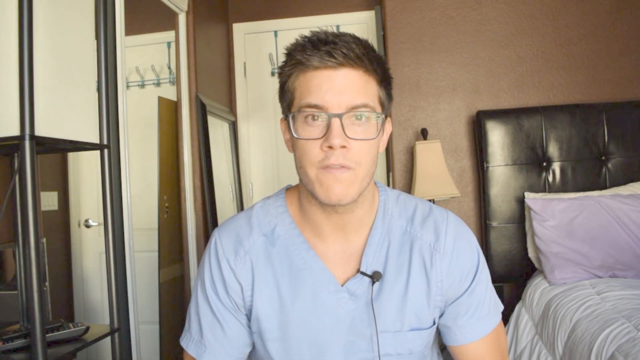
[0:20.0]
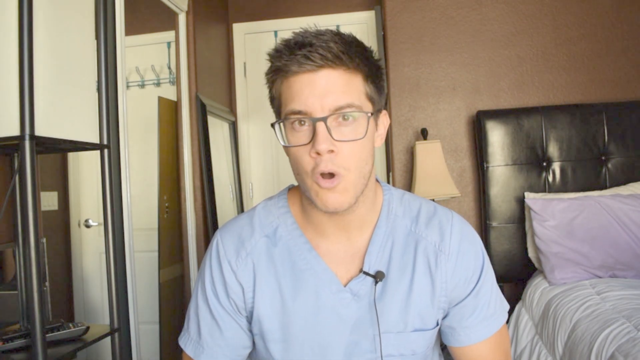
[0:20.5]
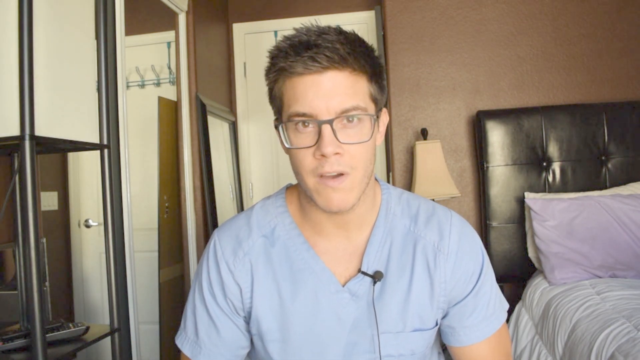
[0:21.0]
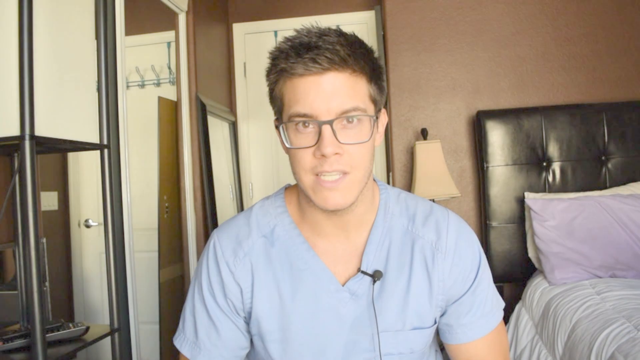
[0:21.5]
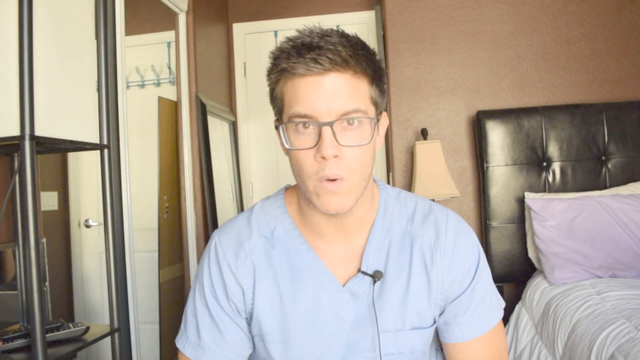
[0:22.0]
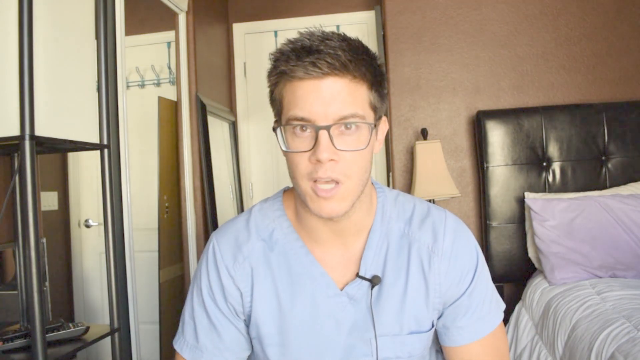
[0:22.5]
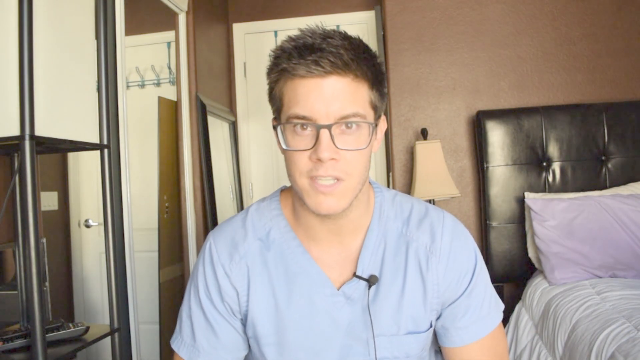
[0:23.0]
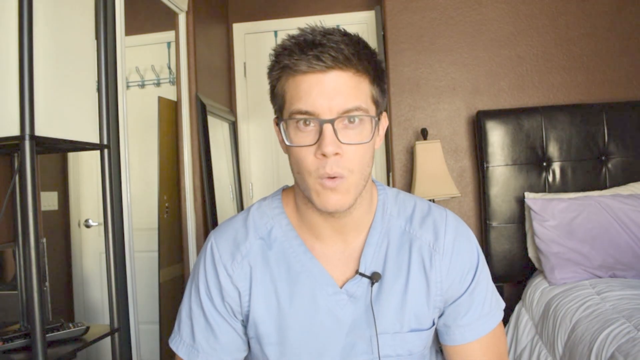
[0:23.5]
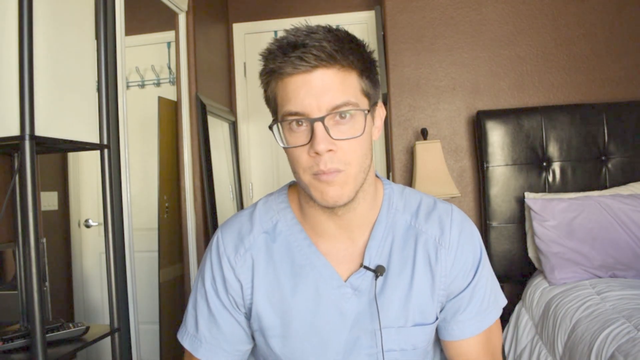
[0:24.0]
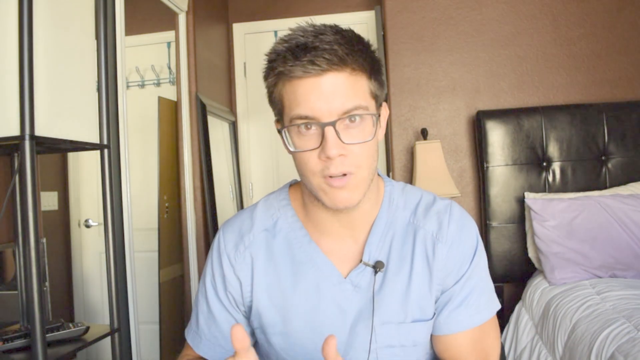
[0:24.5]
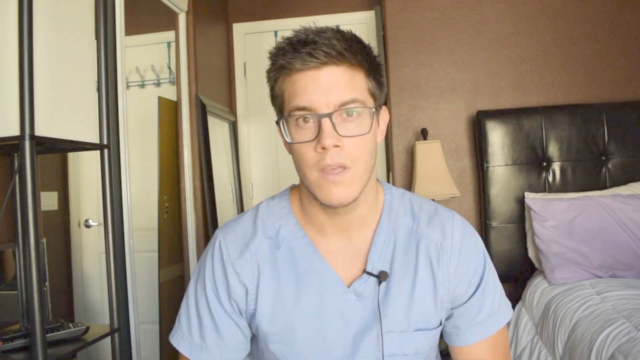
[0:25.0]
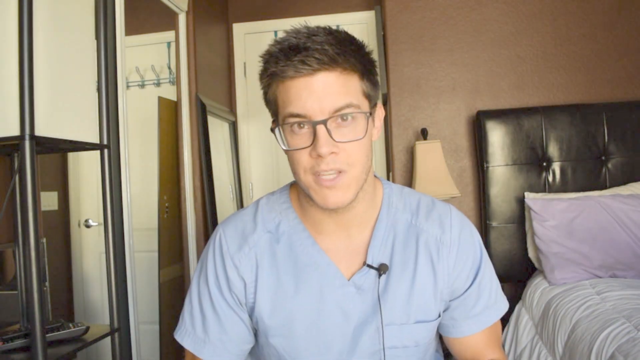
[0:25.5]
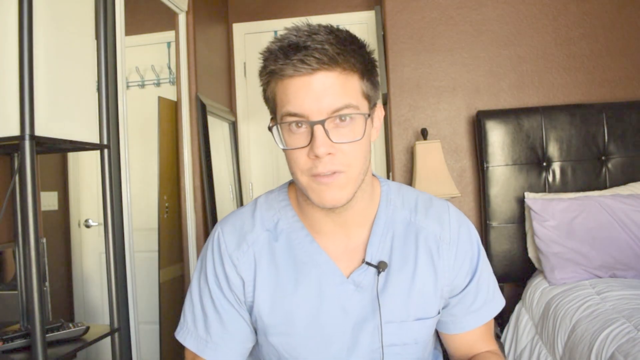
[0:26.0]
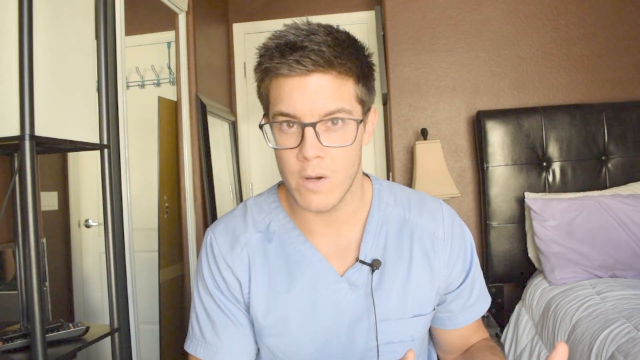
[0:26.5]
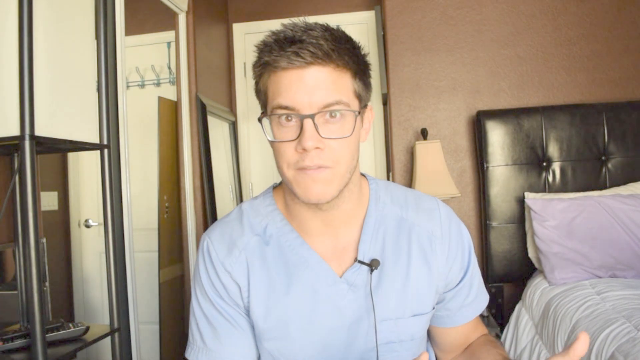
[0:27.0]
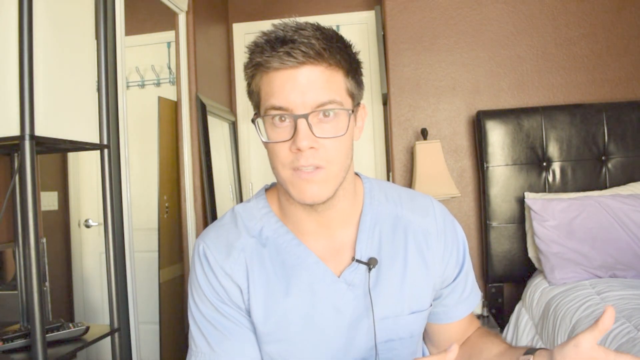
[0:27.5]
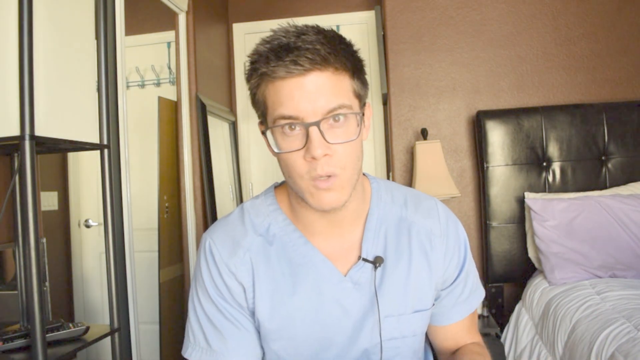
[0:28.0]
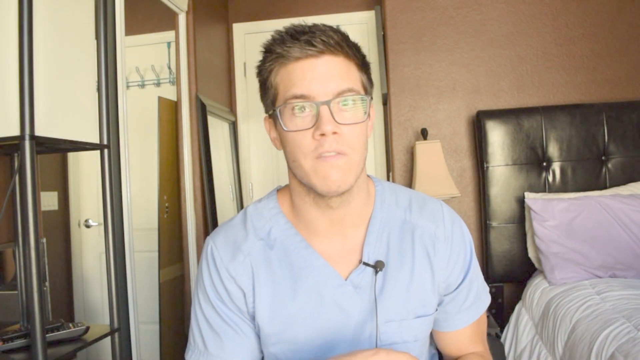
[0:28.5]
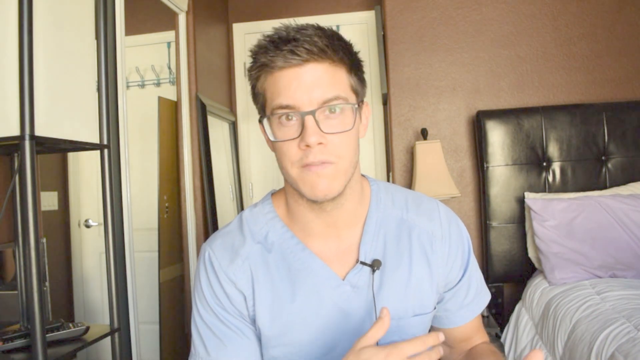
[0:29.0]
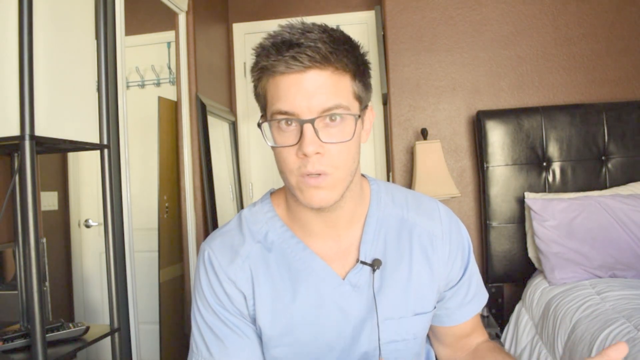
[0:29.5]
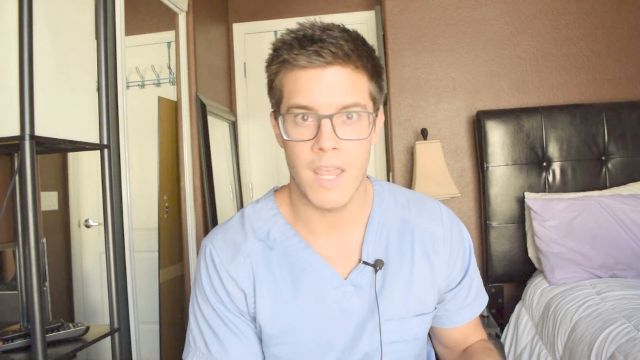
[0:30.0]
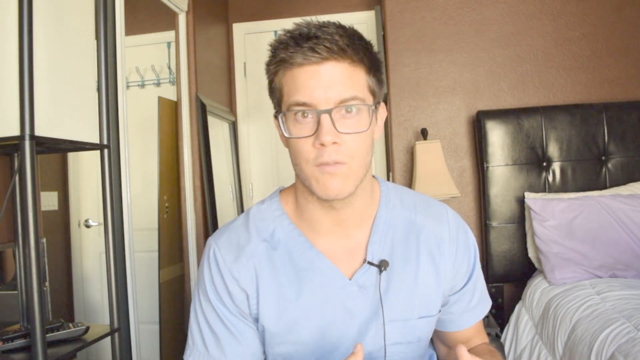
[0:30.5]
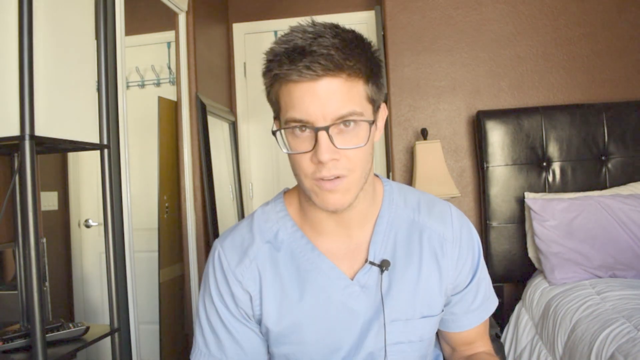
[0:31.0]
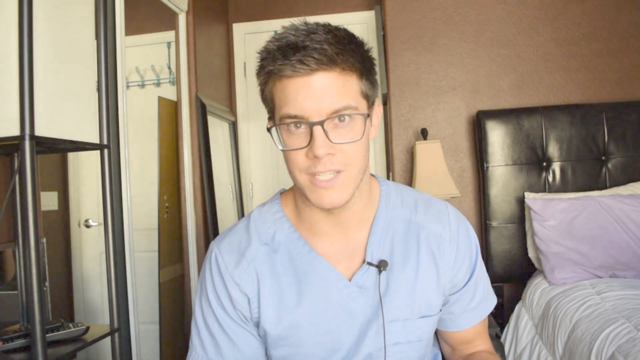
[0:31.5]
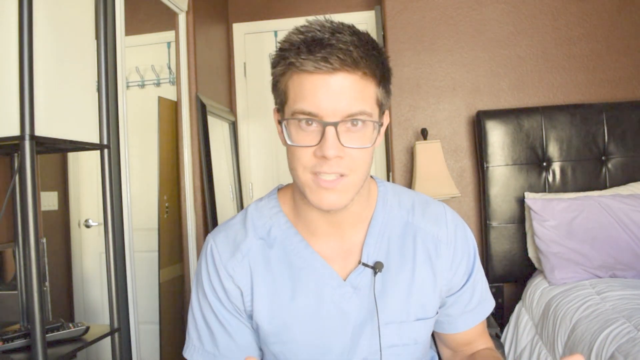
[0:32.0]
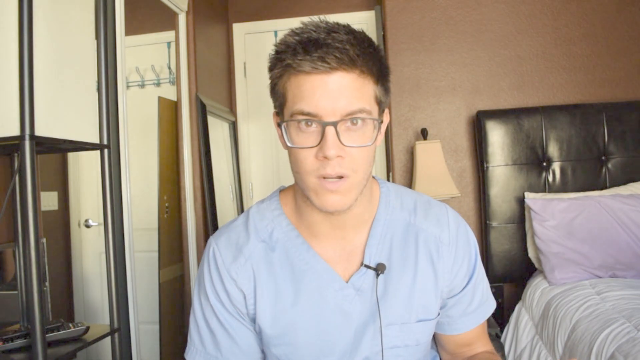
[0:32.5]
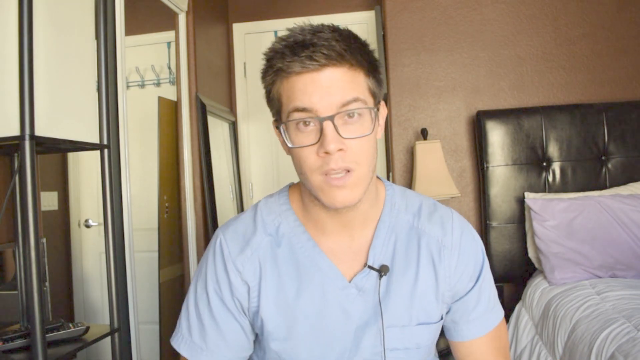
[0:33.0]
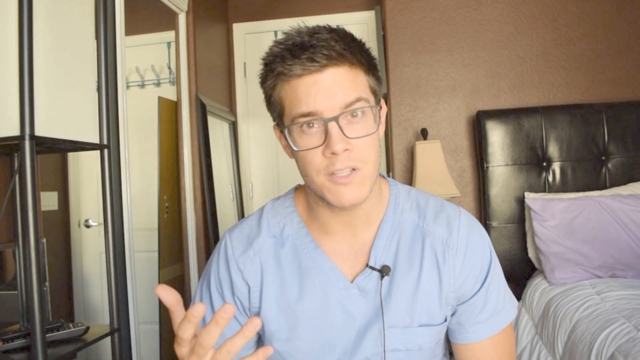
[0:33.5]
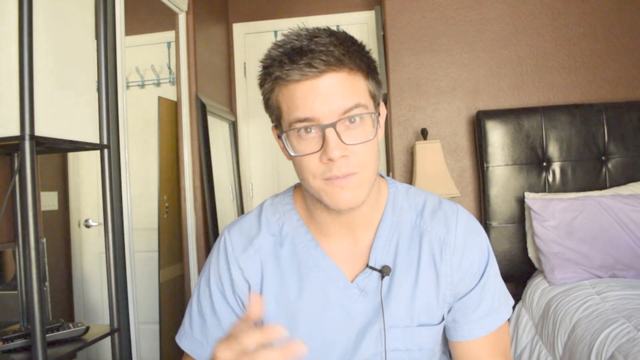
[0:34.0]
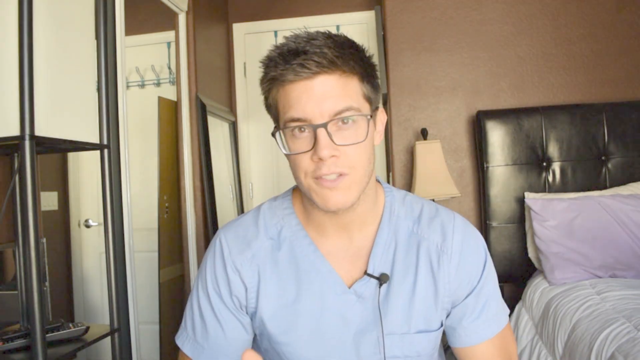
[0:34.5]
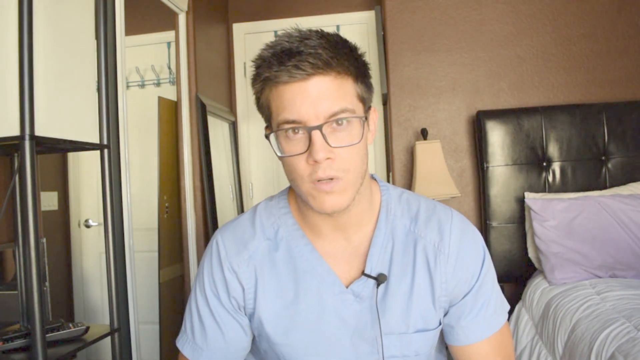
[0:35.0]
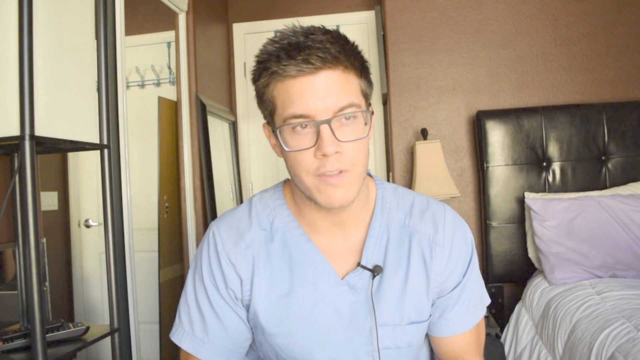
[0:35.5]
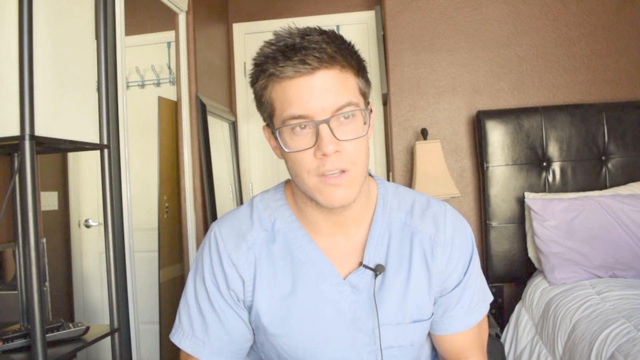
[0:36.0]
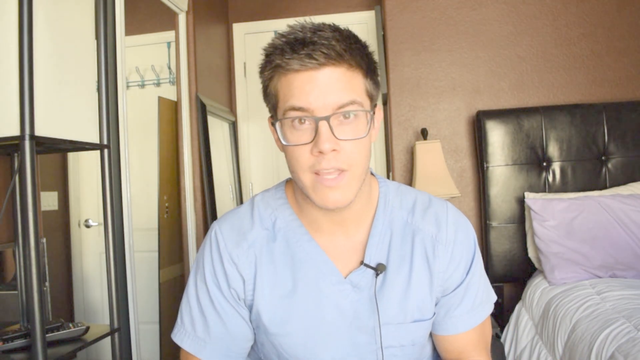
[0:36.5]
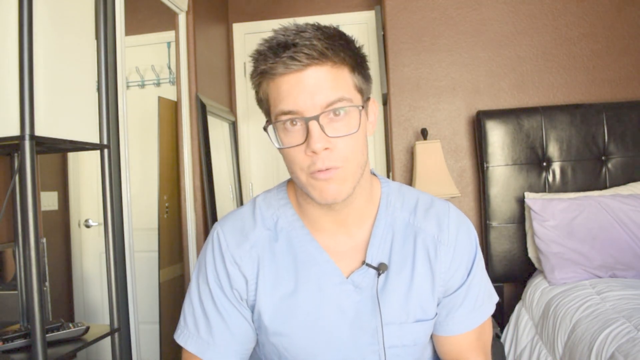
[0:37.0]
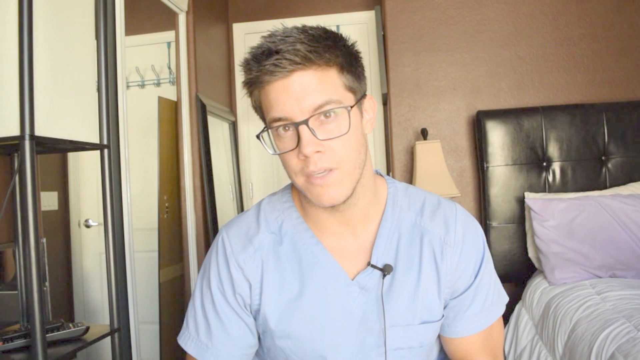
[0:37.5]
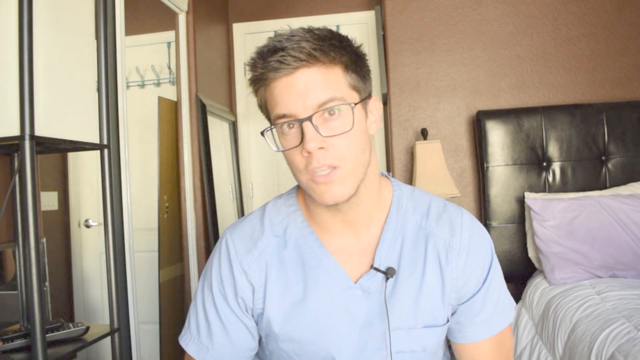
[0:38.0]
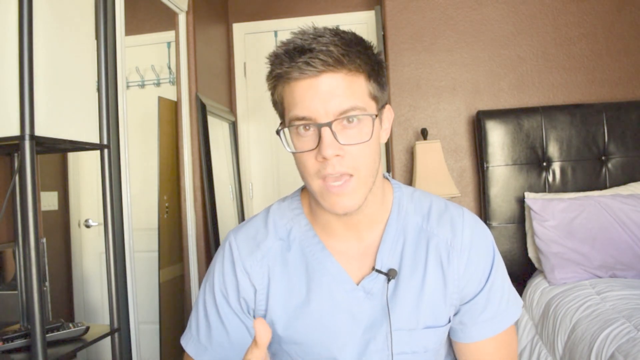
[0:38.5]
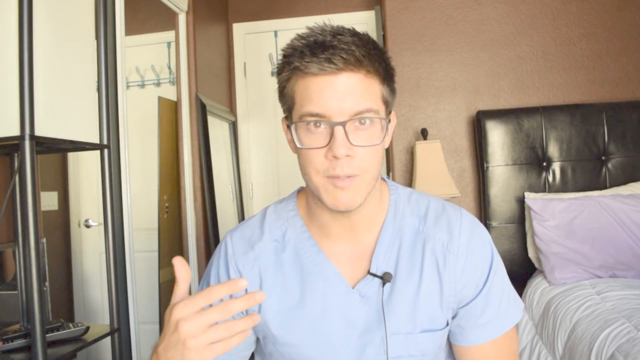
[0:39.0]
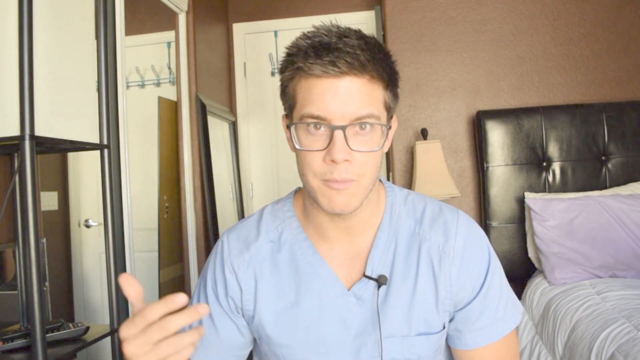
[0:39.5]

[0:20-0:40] The same situation continues: the boy is discussing something, showing something, and talking.